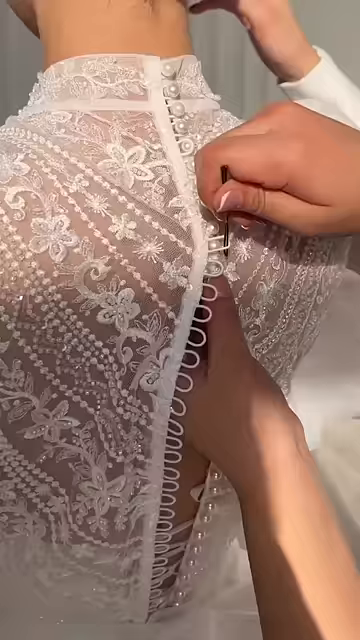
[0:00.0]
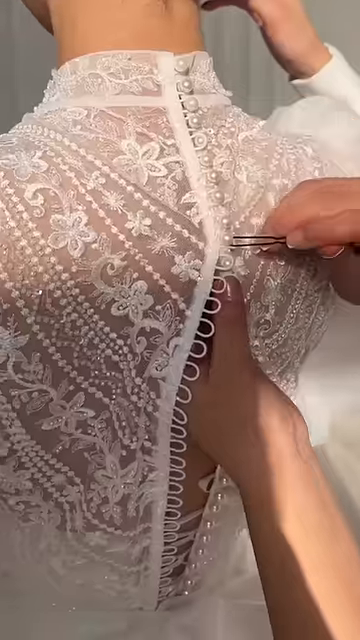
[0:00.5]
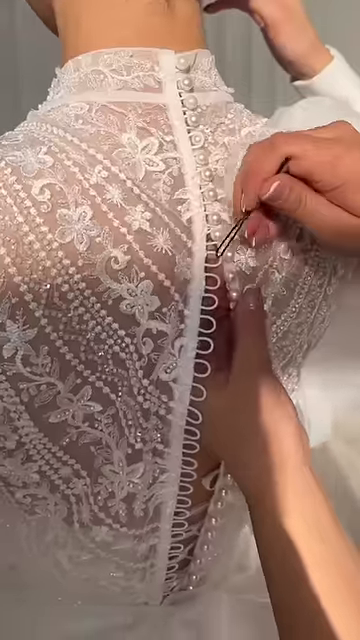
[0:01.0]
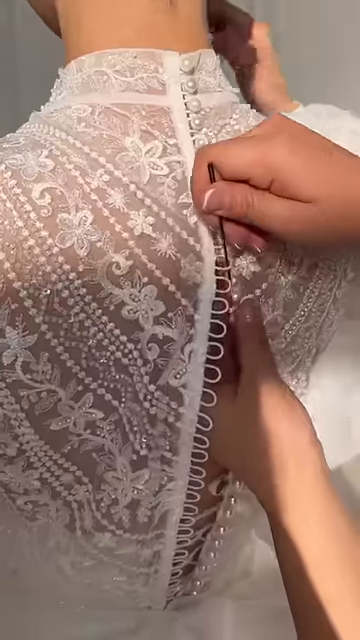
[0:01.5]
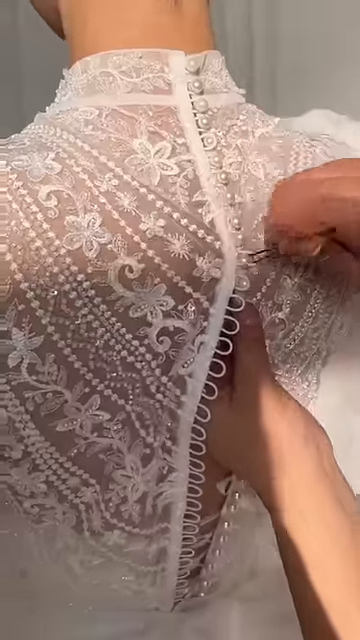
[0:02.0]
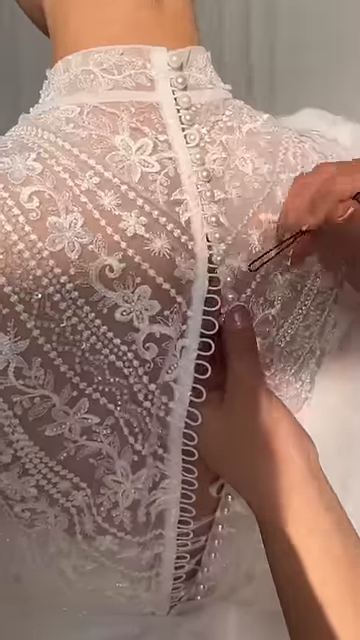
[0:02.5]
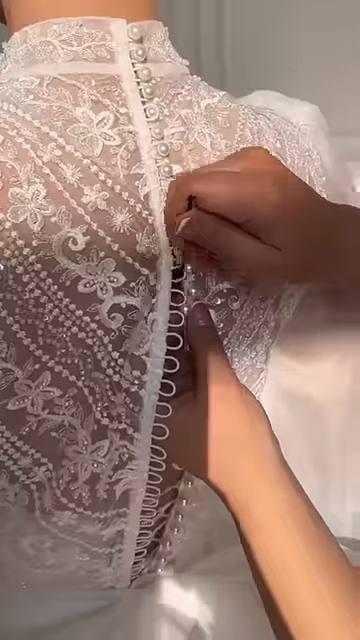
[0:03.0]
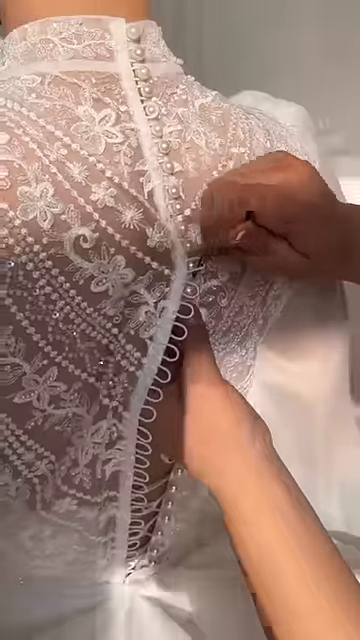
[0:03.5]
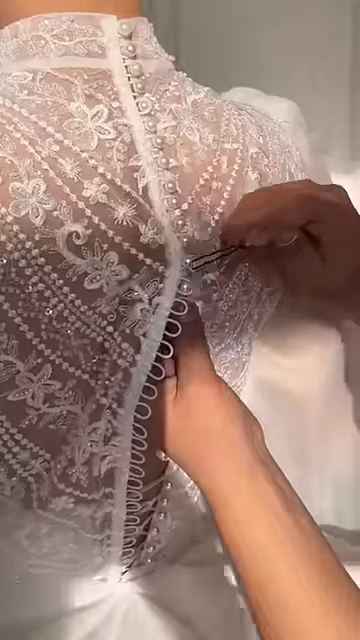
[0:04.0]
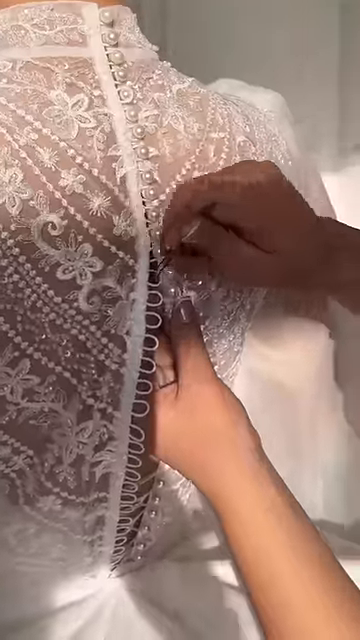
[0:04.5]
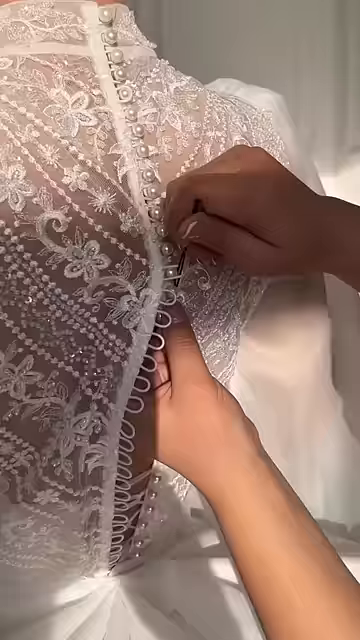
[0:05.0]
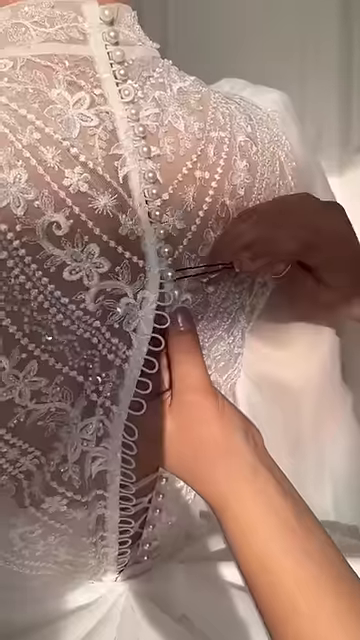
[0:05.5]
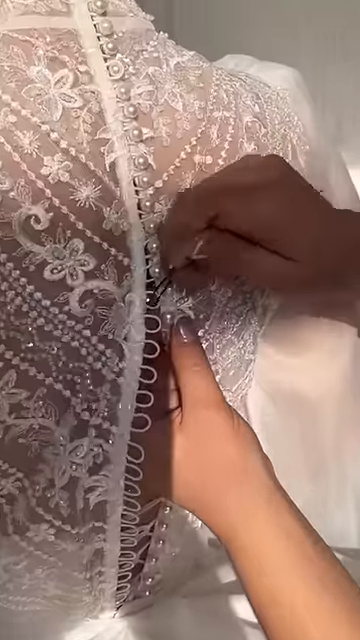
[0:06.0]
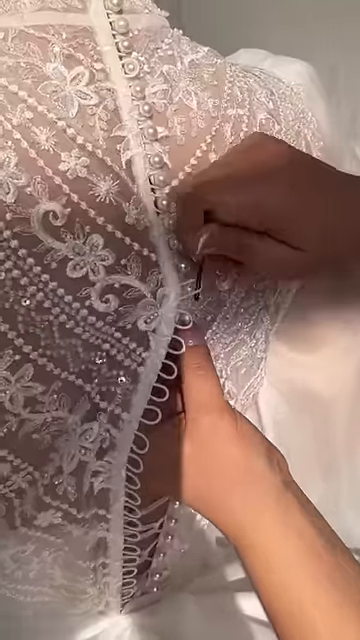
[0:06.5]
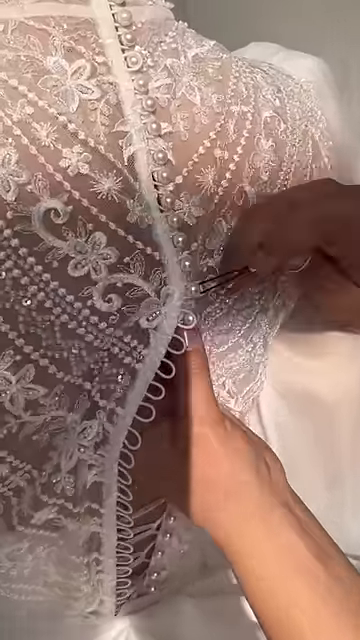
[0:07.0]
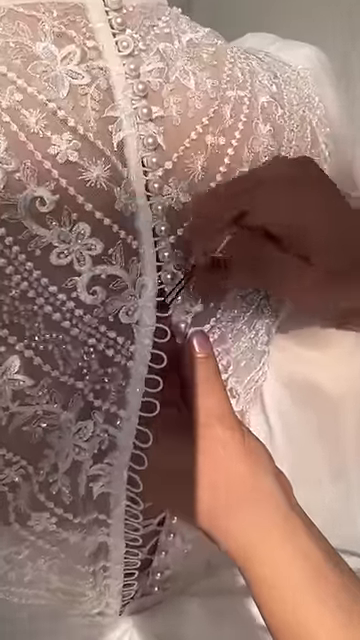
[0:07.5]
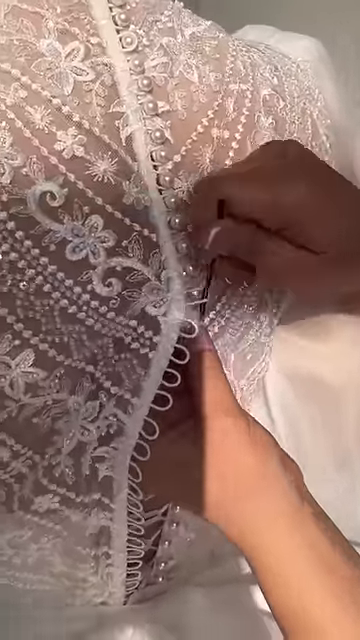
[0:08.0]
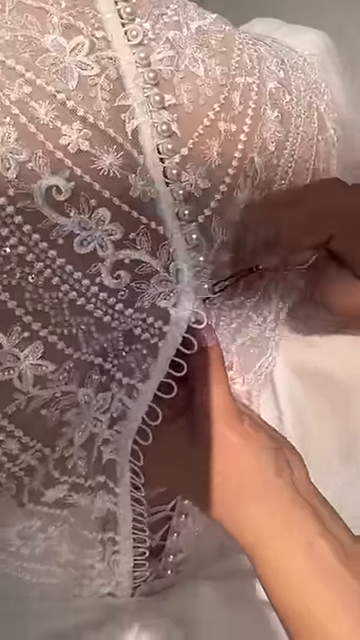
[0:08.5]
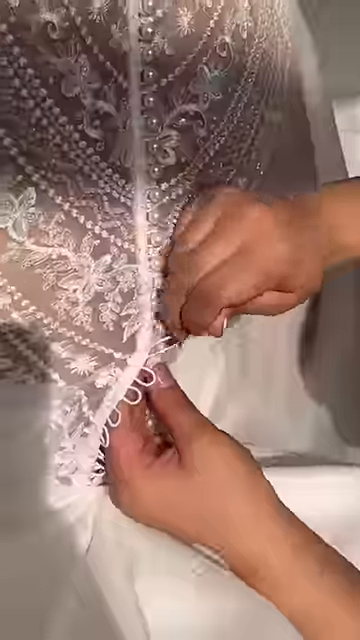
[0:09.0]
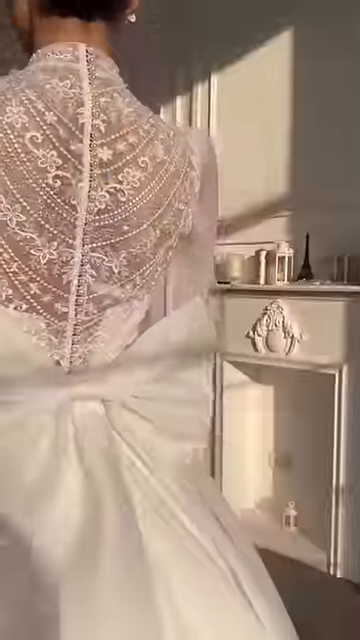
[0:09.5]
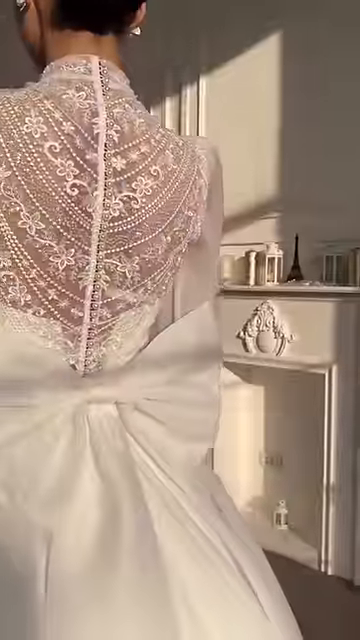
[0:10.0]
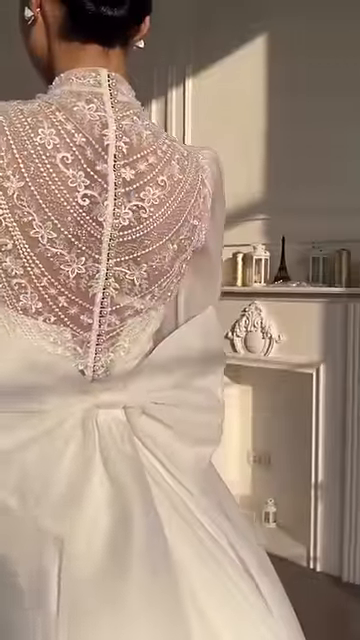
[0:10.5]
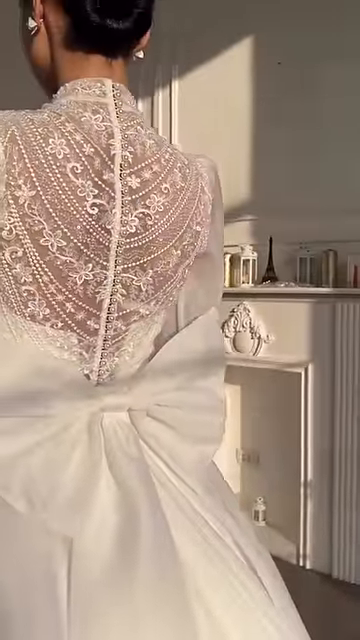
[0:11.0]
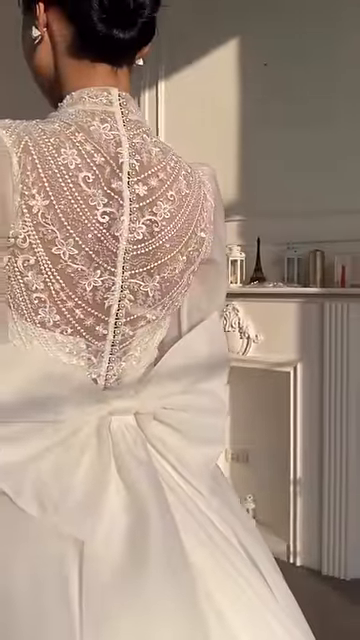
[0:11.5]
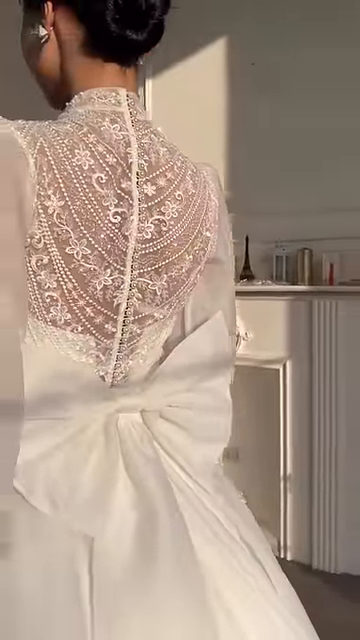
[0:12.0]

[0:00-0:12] The video shows the back of a woman's wedding dress as someone slightly stretches a button loop over a pearl button, closing the whole back of the adorned dress. A person's hands are at the back, doing this delicate work; she has manicured nails and uses a tool that looks like a little hook to pull the latch of the rubber band over the pearl. She starts at the top and works down the whole back of the person wearing the dress. The video then kind of zooms out a little, showing the finished result with the whole dress buttoned up in the back. Lace is visible, and the woman wears white earrings that appear to match some of the pearls on the dress. Her hair is done up and off her neck, so the beadwork, lace and trim on the dress can be seen. The back of the dress also has a very wide satin bow at the base of her waist, and the long, spread-out lower train of the dress hangs down.